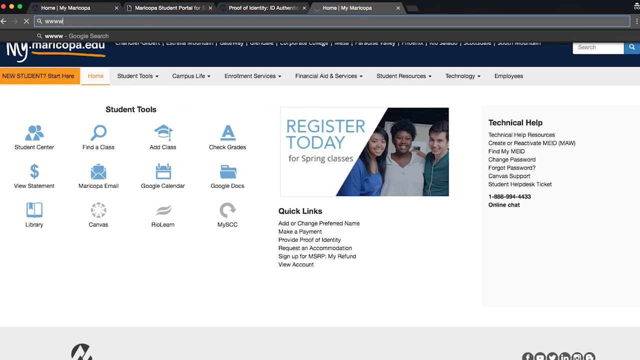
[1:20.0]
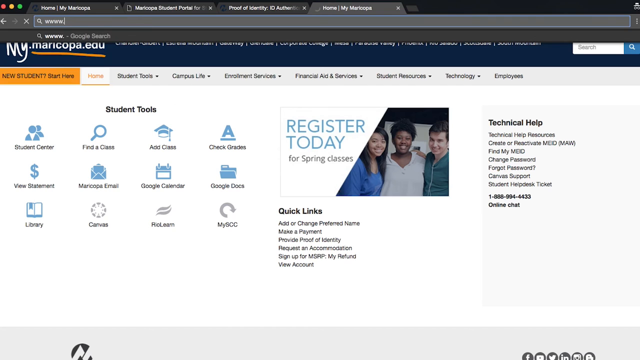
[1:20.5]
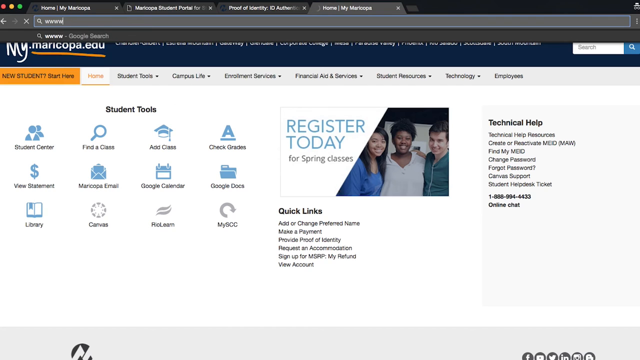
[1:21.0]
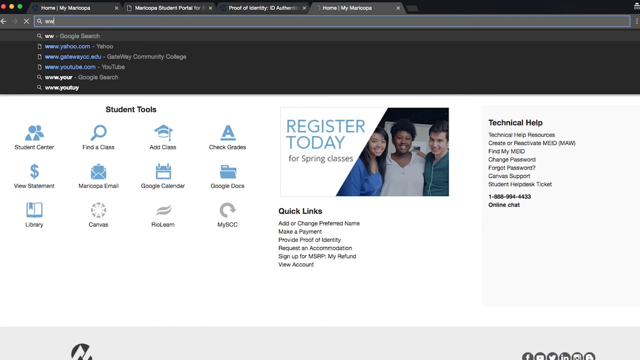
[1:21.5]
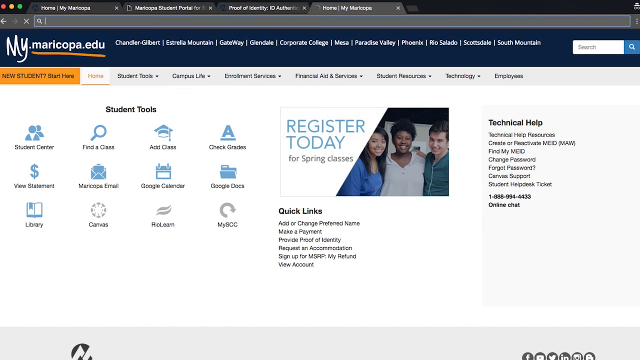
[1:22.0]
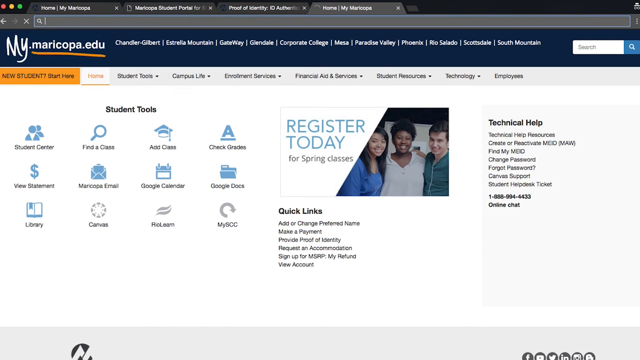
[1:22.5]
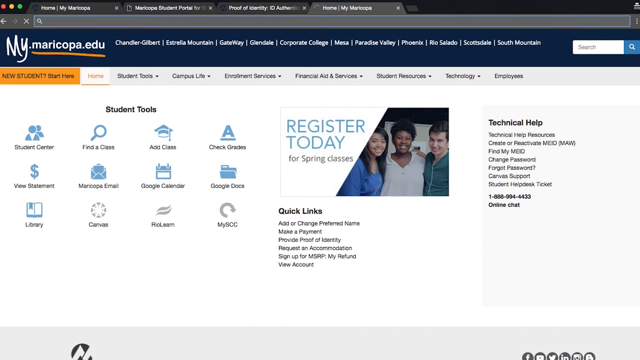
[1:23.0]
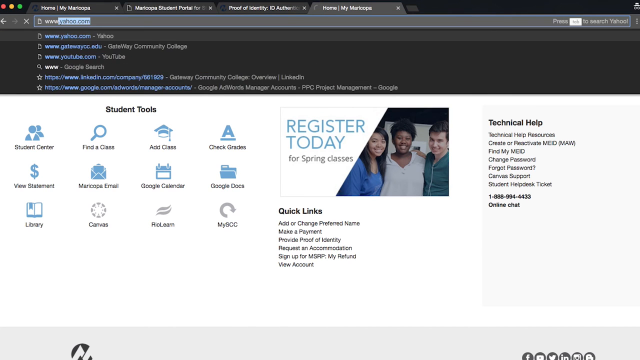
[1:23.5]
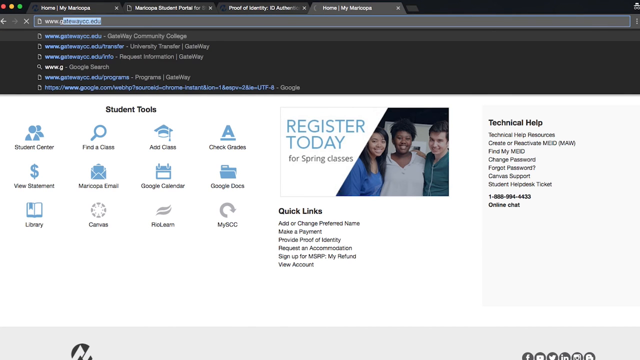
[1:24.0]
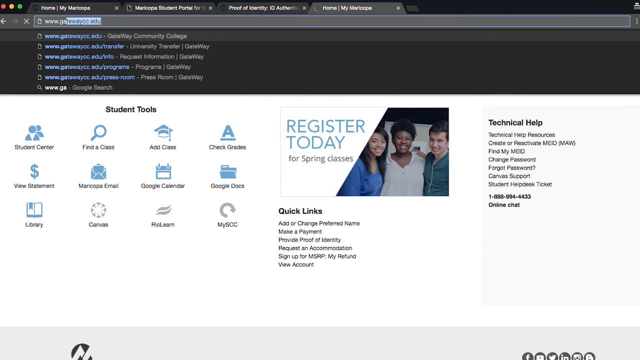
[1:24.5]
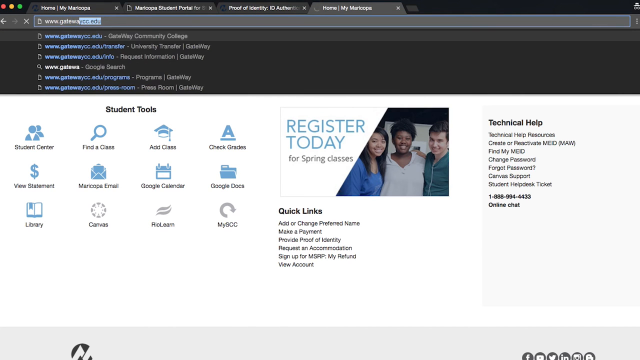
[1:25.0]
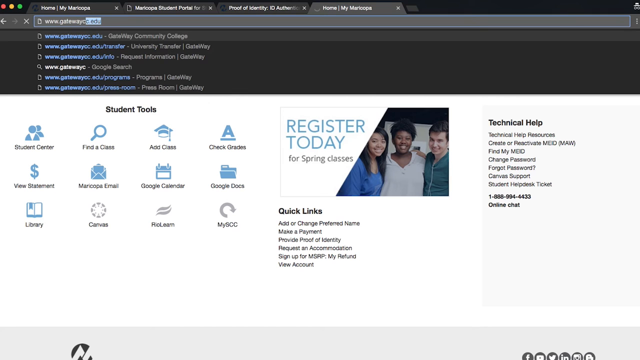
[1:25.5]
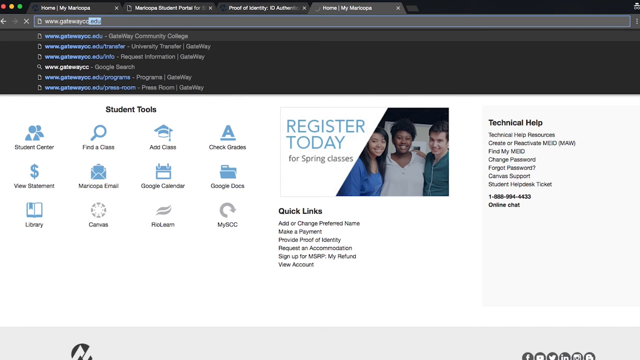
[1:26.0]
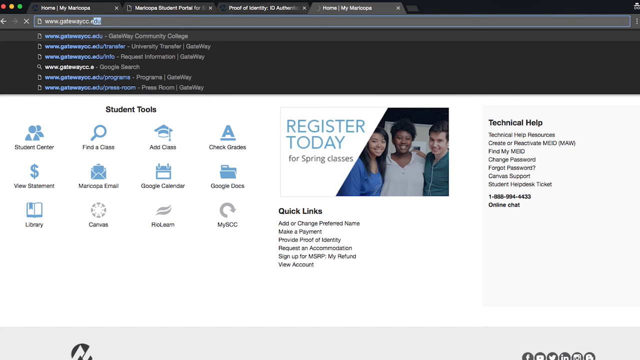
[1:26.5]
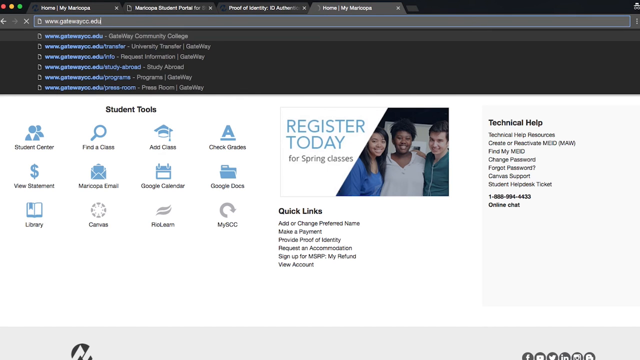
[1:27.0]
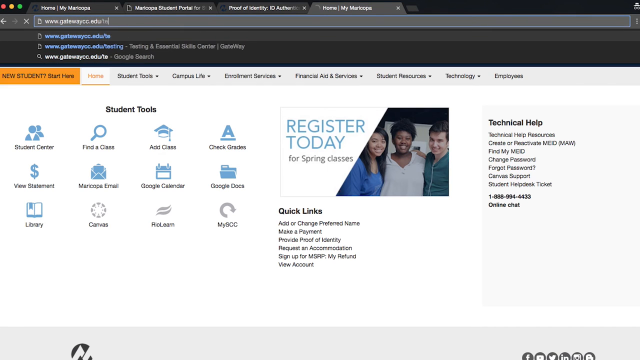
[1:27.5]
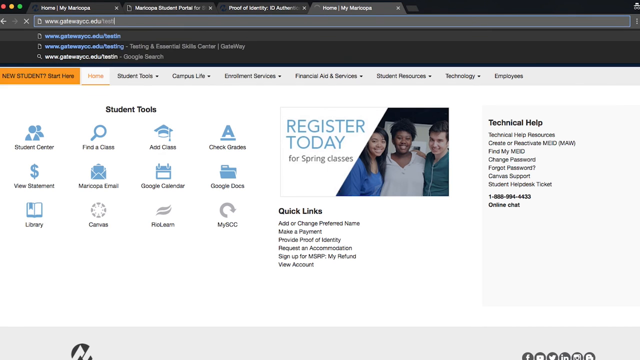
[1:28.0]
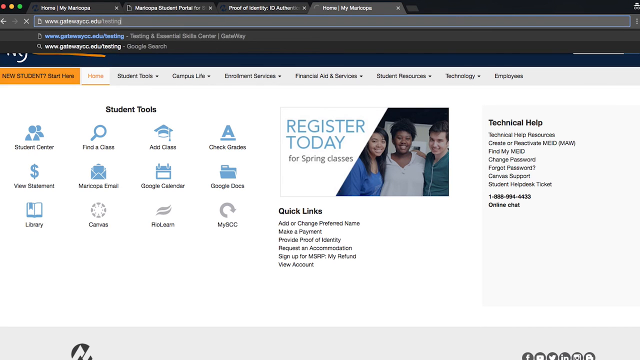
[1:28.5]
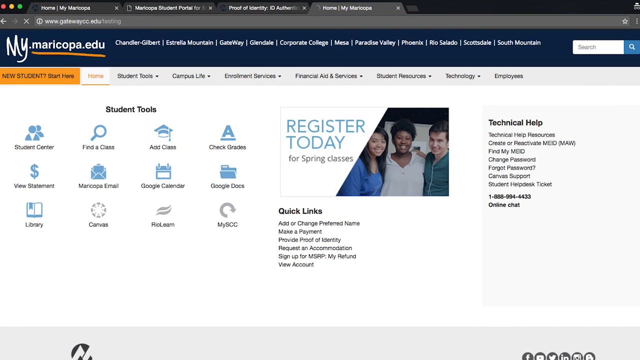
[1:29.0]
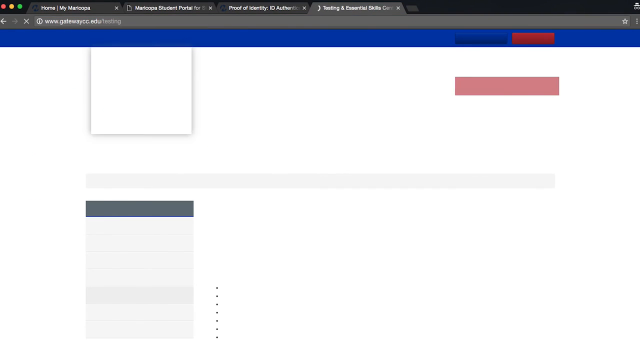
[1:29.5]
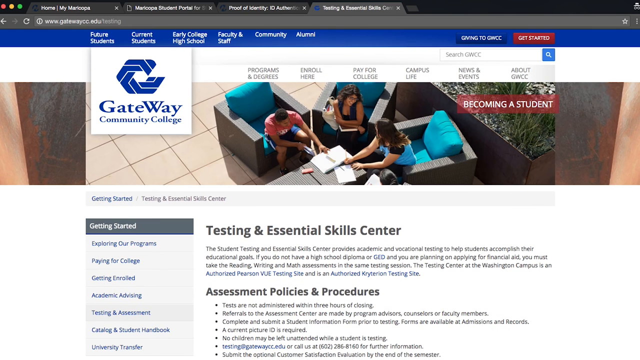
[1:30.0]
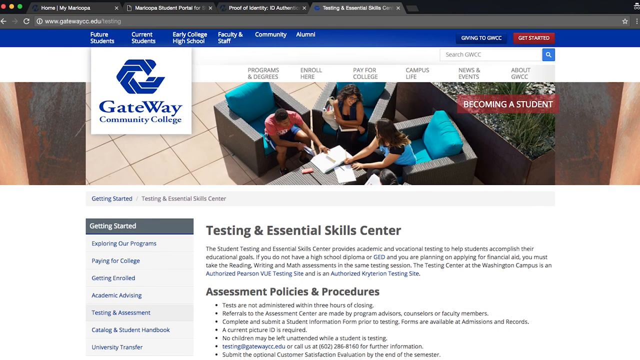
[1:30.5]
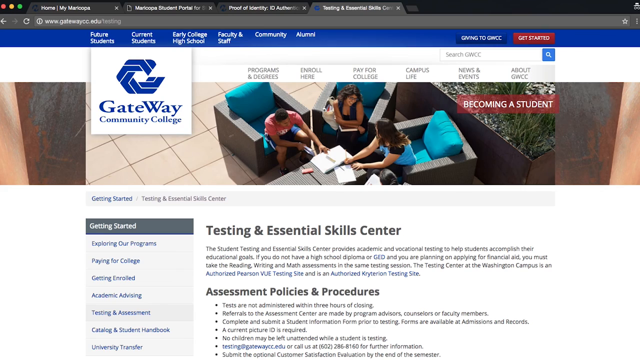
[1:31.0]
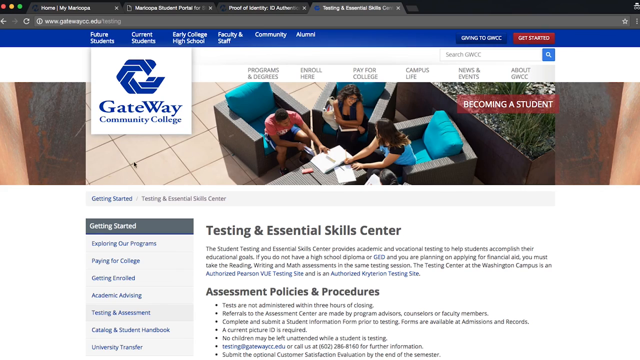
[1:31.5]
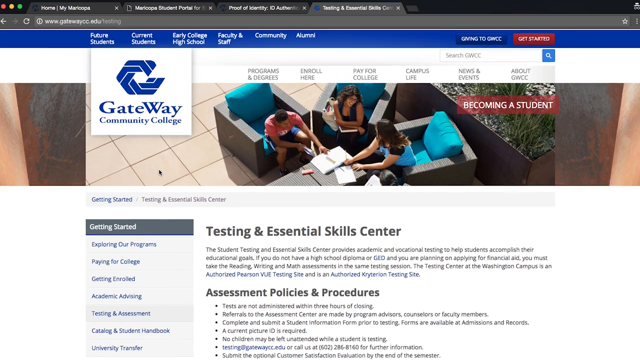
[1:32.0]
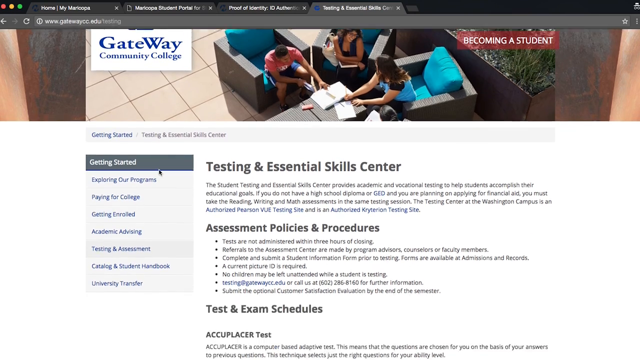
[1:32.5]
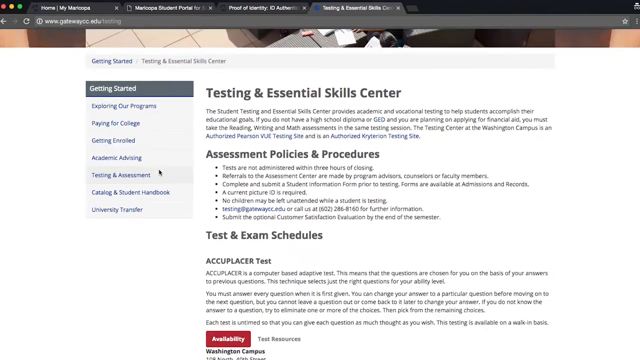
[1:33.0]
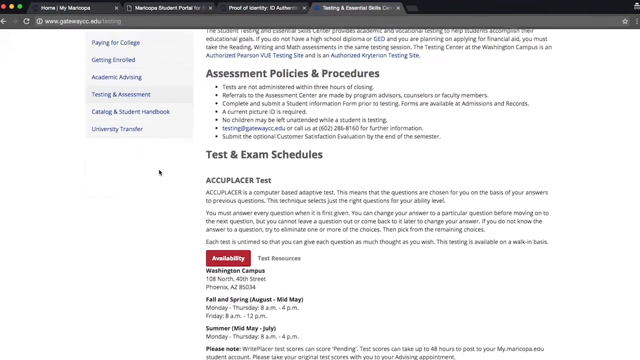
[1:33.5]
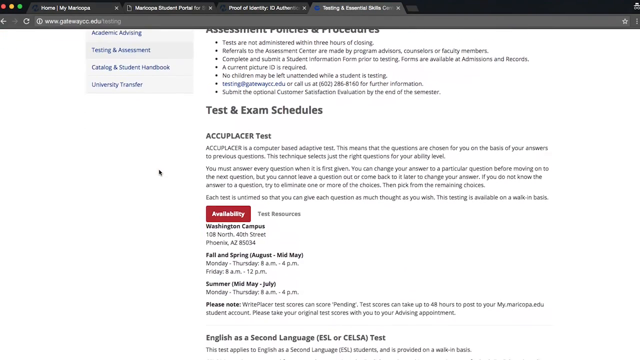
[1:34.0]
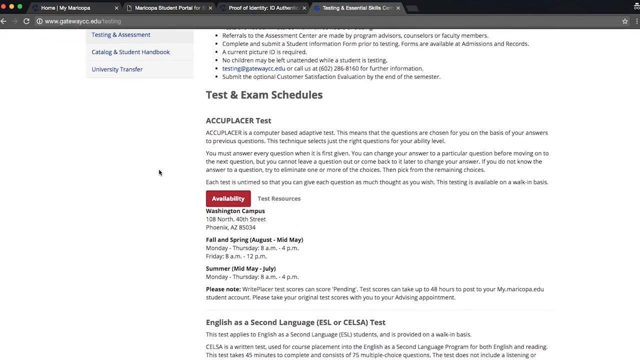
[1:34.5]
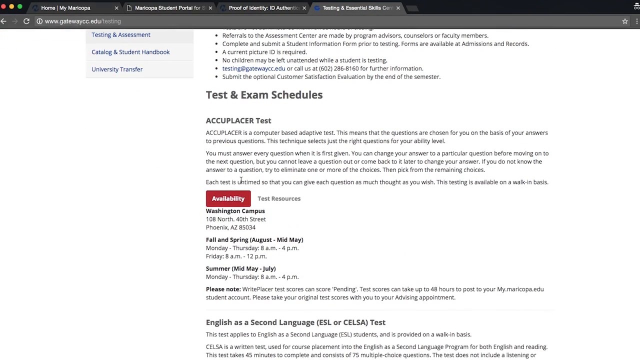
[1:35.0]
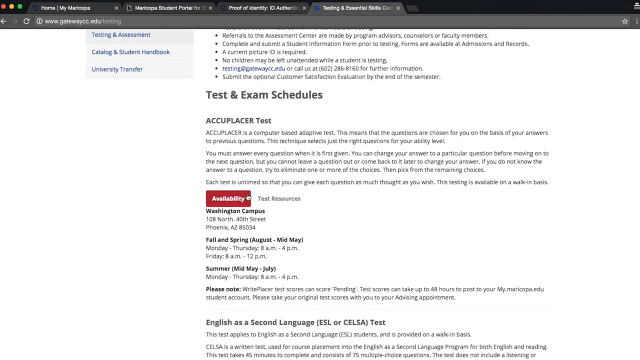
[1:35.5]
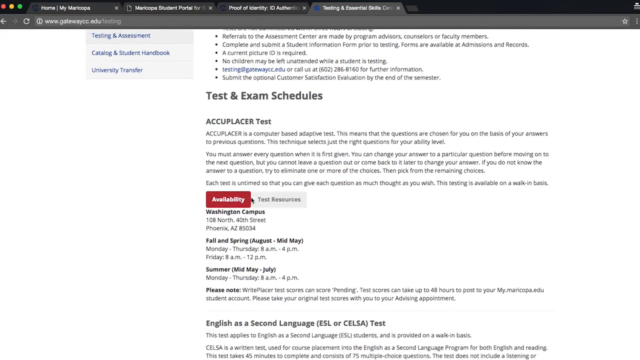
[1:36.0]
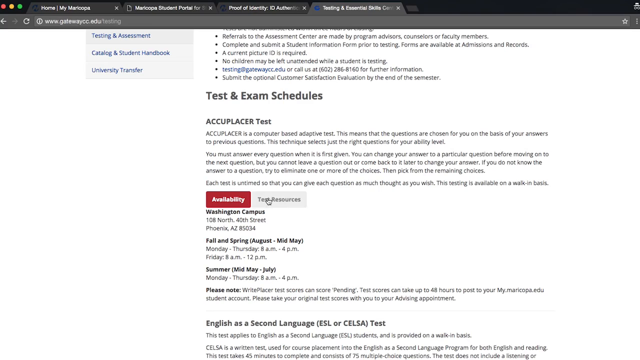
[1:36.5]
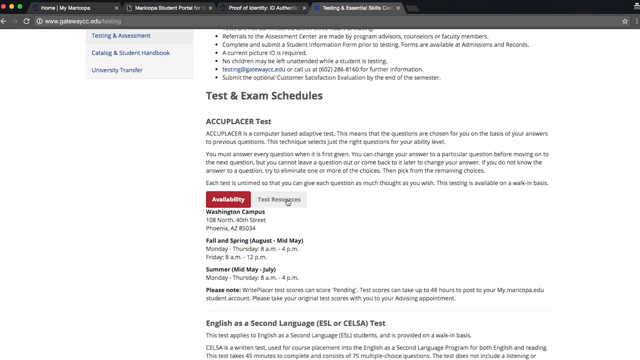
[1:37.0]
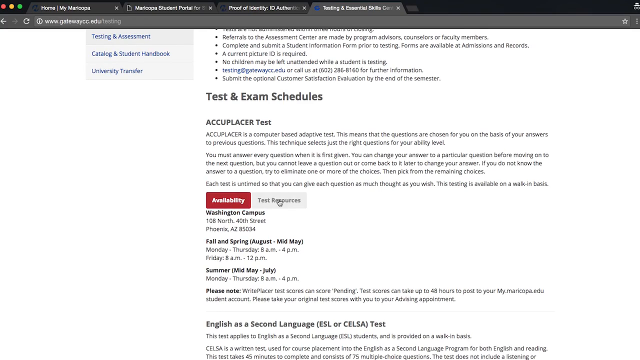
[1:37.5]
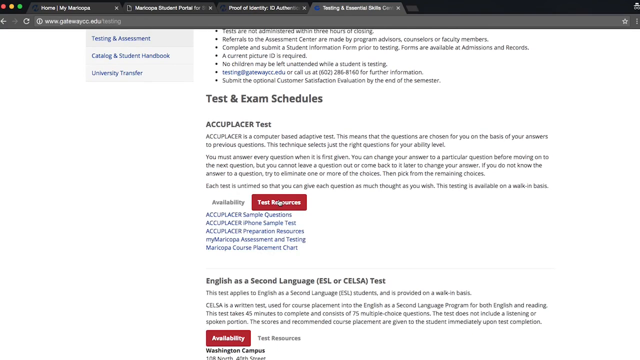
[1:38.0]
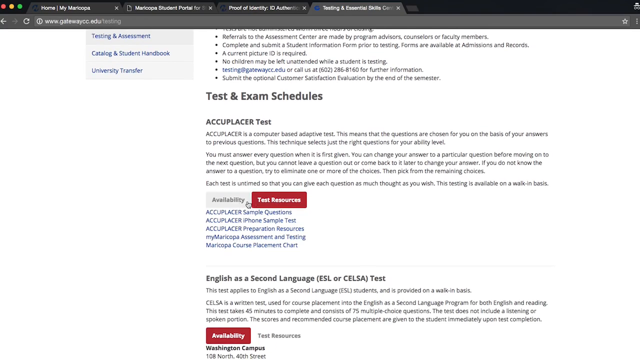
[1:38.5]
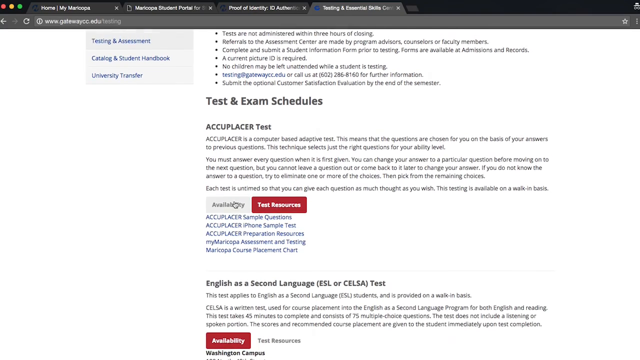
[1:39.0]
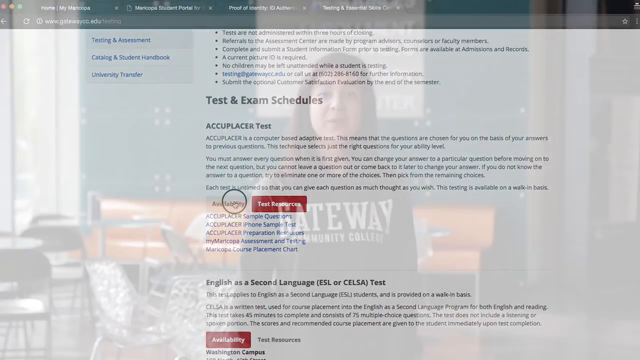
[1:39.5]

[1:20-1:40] The mymericopa.edu website is on screen, with various items to help new or old students. The user types in a website, gatewaynycc.edu, which leads to the Gateway Community College page. They scroll down past the test and exam schedules and look for resources for a test. A woman then appears, talking to the camera. She has dark hair and wears a black hoodie that says "Gateway Community College" in white. Behind her is a blue wall and a white picture with various things about the college on it. She is in a lounge with a couch behind her, a table and chairs, a window to the left, and various other items. The lounge is most likely where students eat.